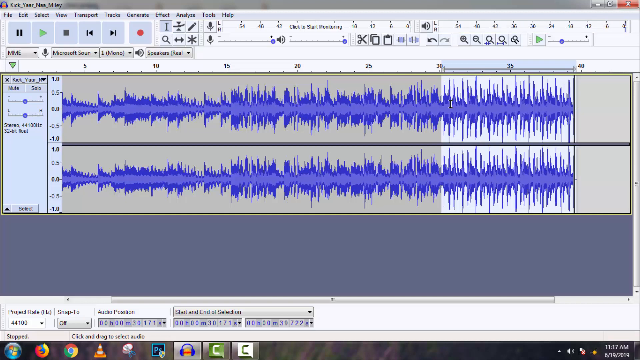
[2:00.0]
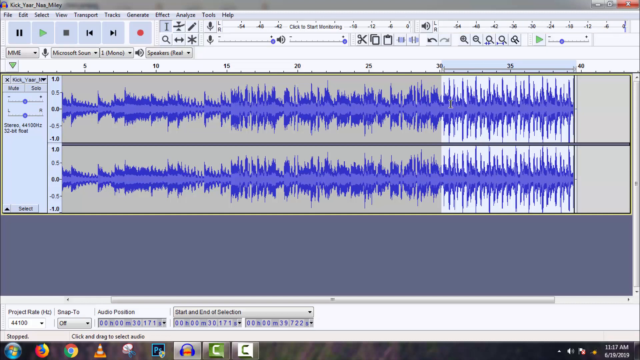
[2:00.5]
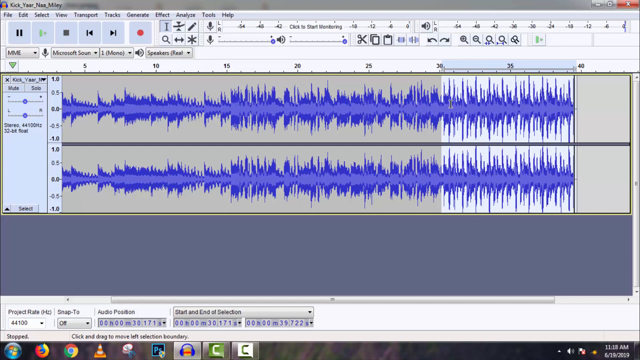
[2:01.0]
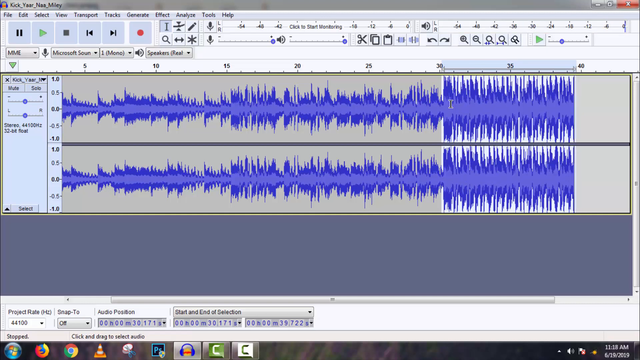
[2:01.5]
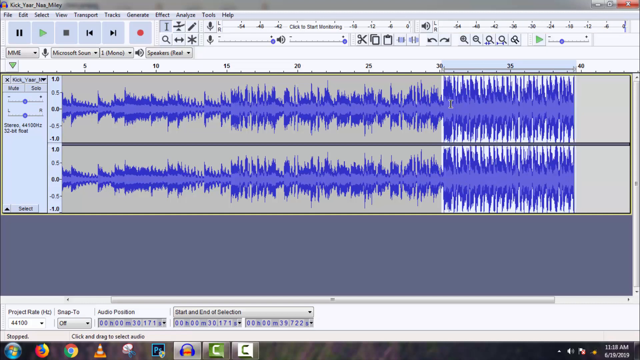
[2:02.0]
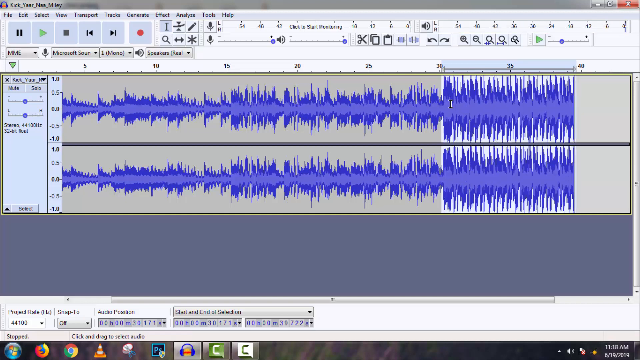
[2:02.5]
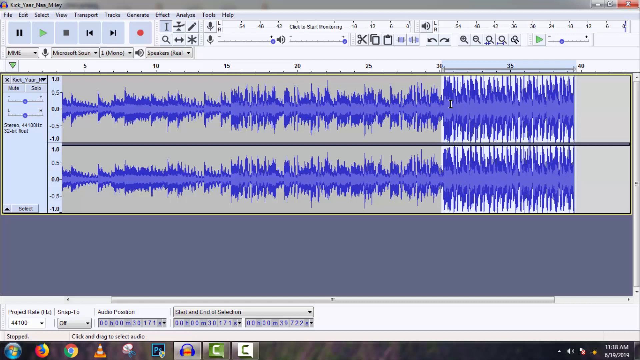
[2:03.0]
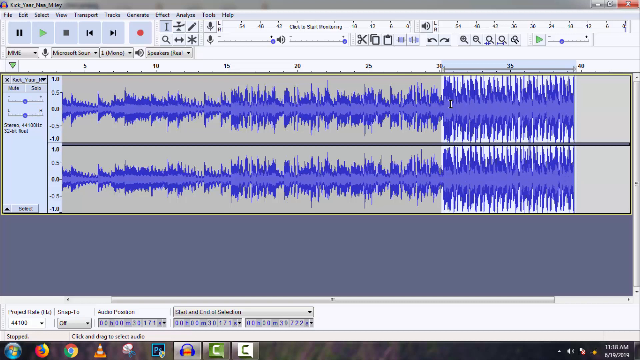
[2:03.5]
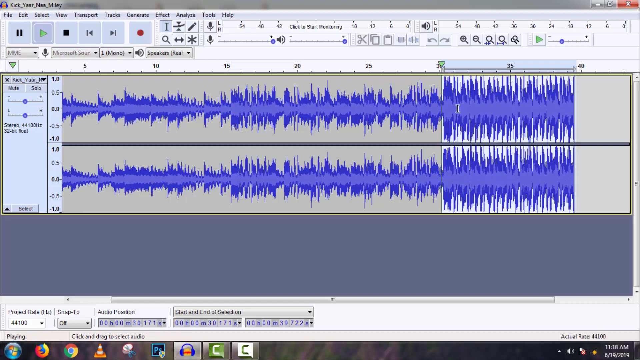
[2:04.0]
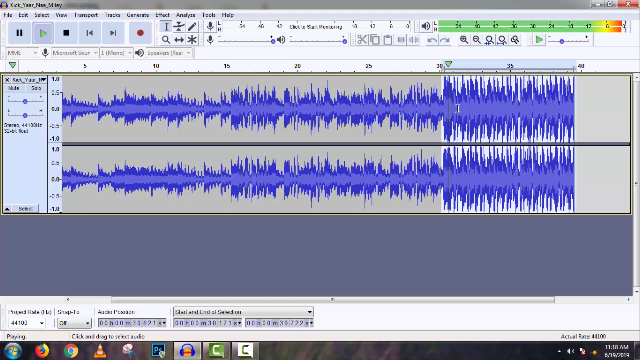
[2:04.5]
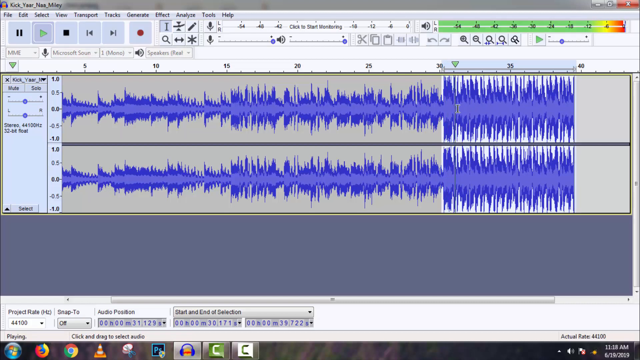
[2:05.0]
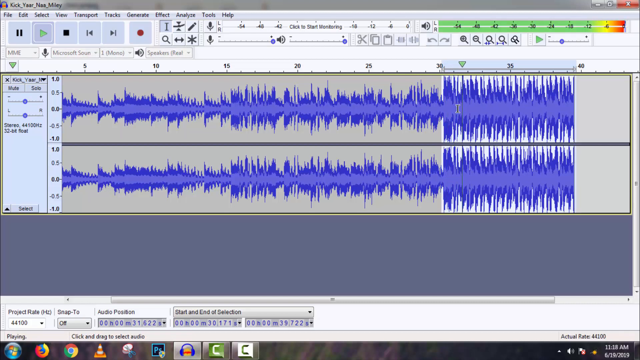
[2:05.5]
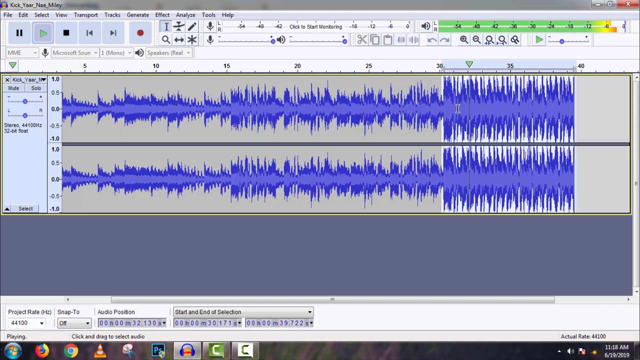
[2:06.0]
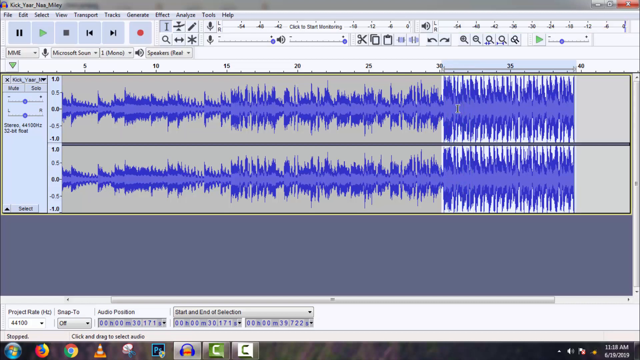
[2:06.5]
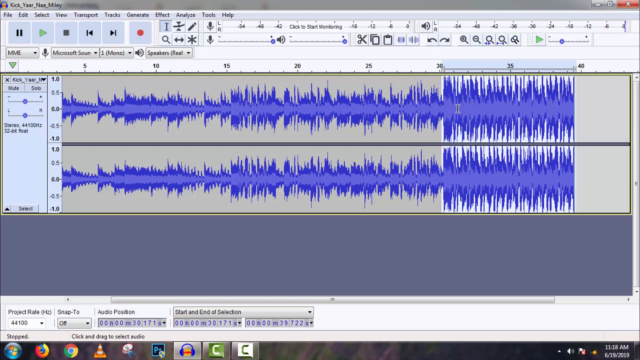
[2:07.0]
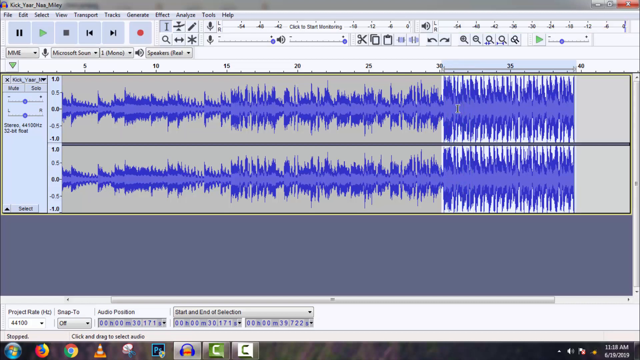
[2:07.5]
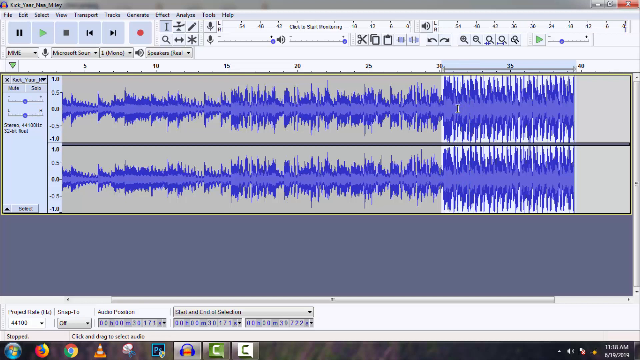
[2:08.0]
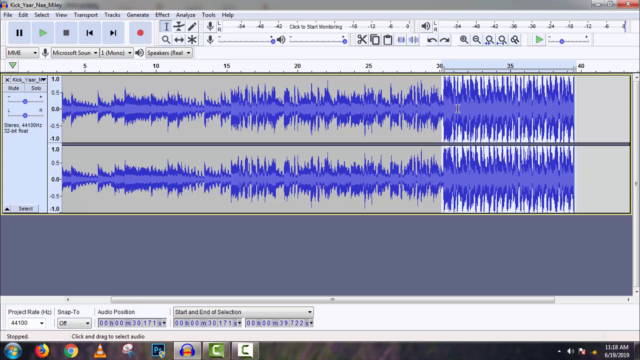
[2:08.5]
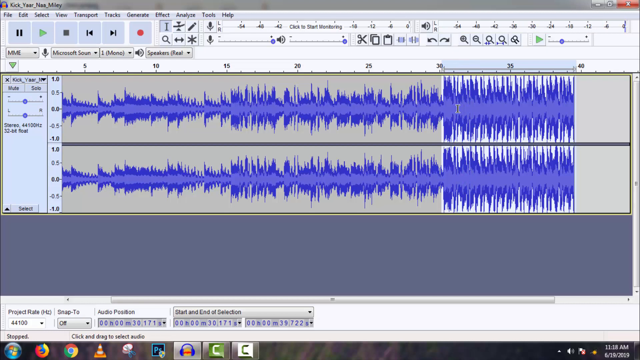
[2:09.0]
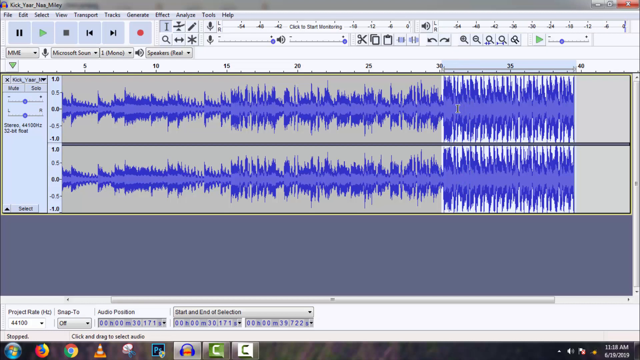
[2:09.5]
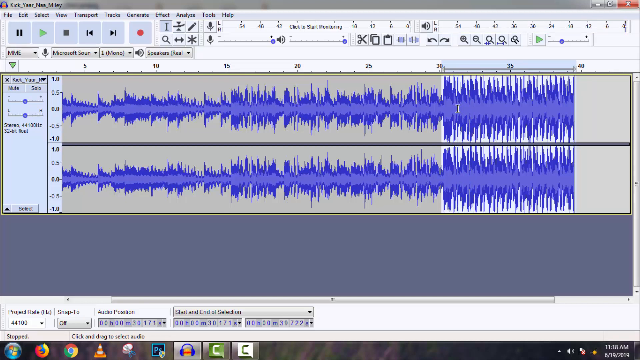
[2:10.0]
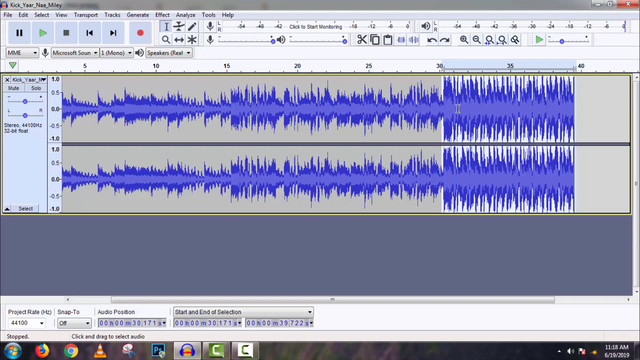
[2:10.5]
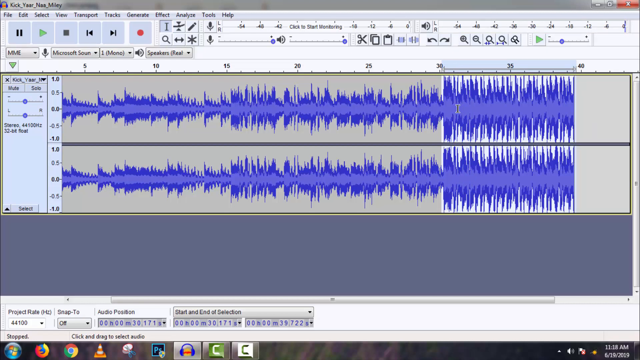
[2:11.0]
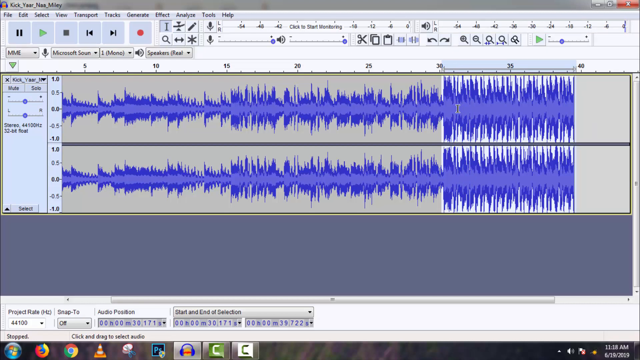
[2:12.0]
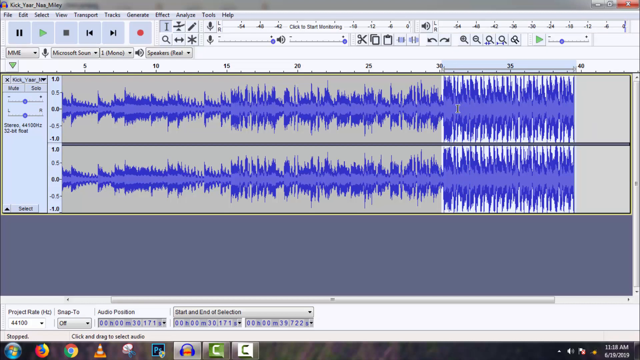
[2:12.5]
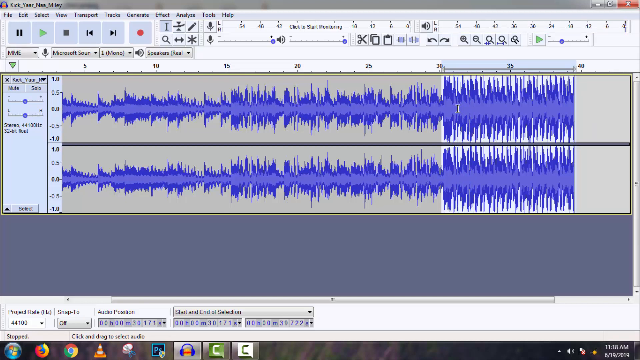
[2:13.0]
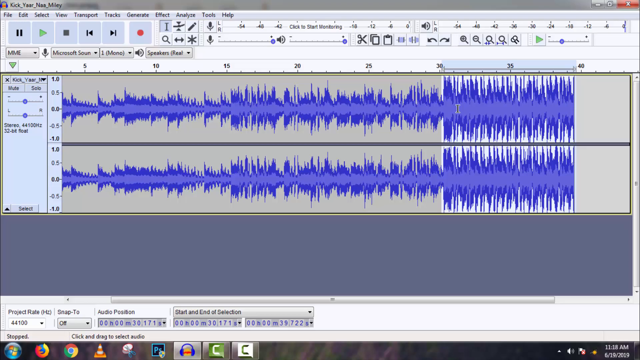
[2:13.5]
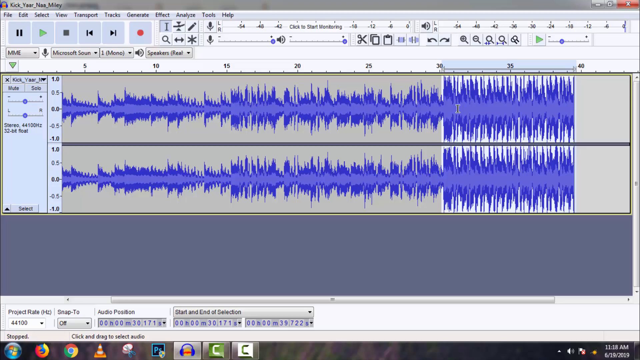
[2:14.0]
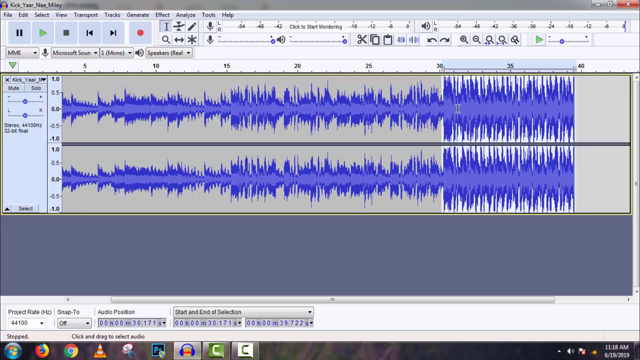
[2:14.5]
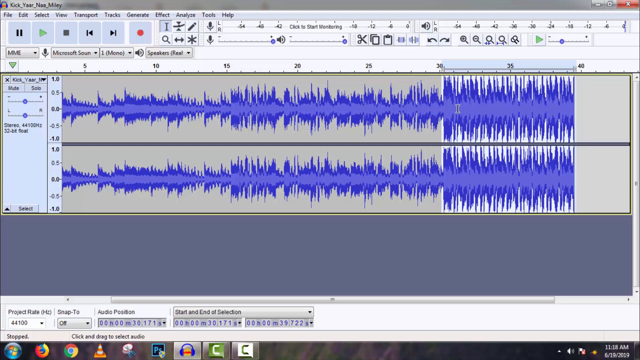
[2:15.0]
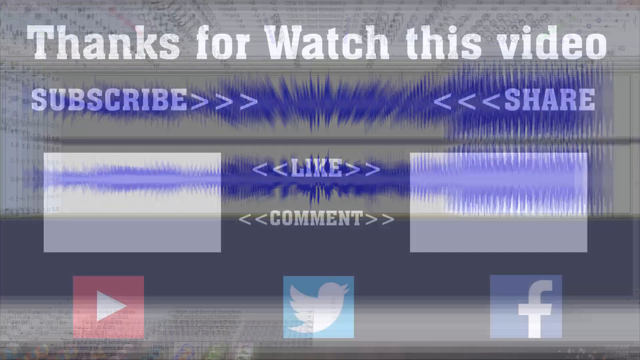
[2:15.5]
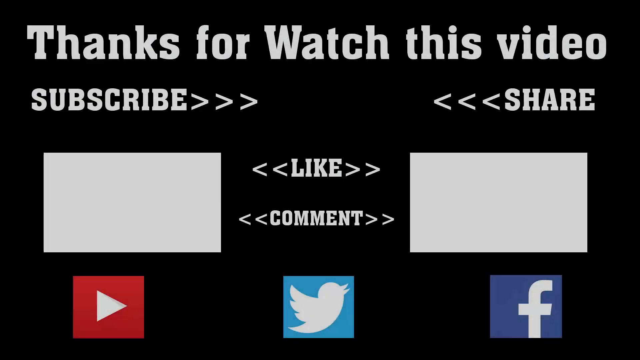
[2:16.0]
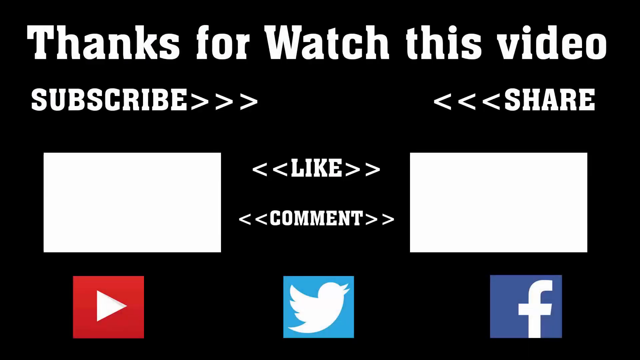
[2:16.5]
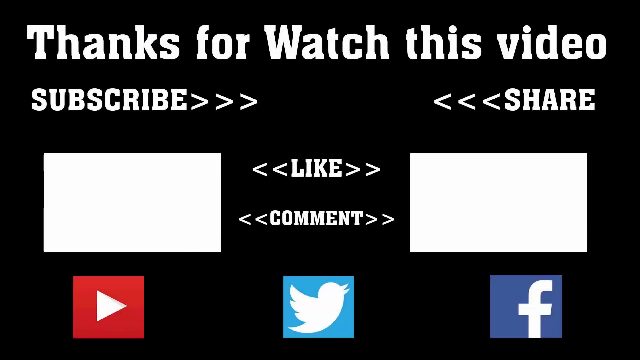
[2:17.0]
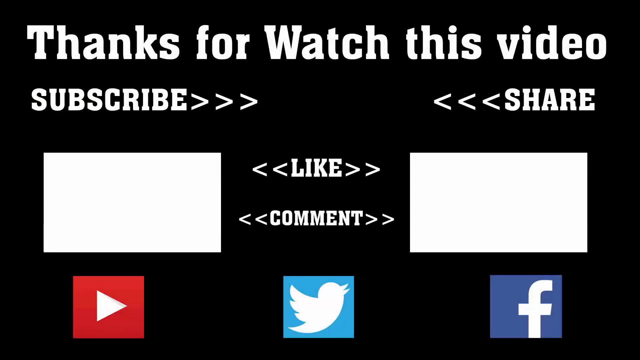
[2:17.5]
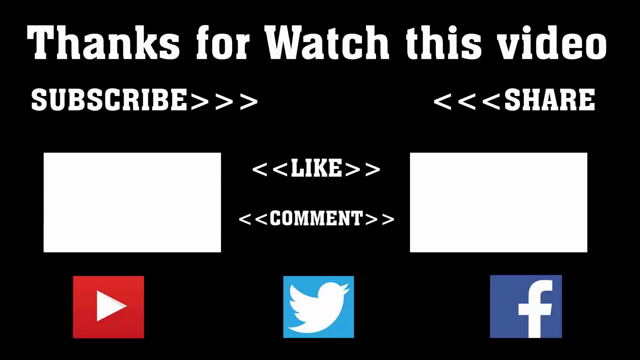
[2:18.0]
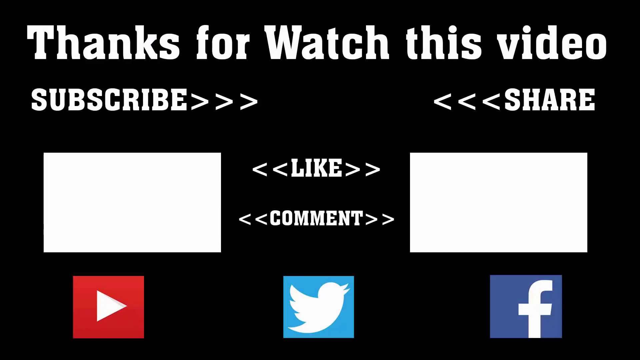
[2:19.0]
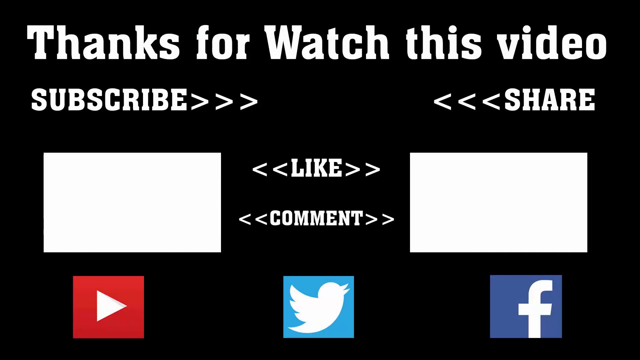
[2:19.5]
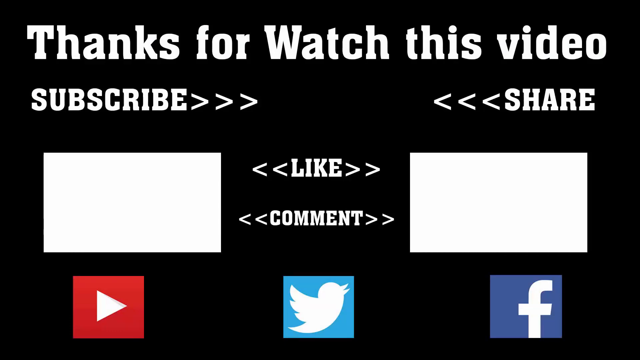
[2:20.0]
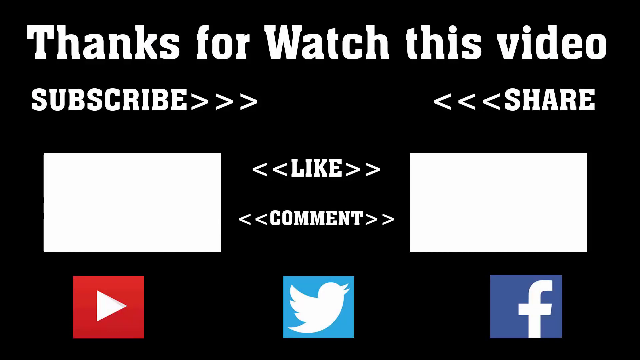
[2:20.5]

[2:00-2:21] The sound waves are still on screen, and the person edits them by moving the cursor over the area shown, going through a section marked 30 to 40, with the unit unclear. The video then ends on a screen with "thanks for watching" in white at the top, along with options to subscribe and share, and like and comment options in the middle. There are YouTube, Twitter, and Facebook symbols: the YouTube symbol is a red square with a white play button in the middle, the Twitter symbol is a baby blue square with a white bird, almost a dove, in the middle, and the Facebook symbol is a dark blue square with a lowercase white f.